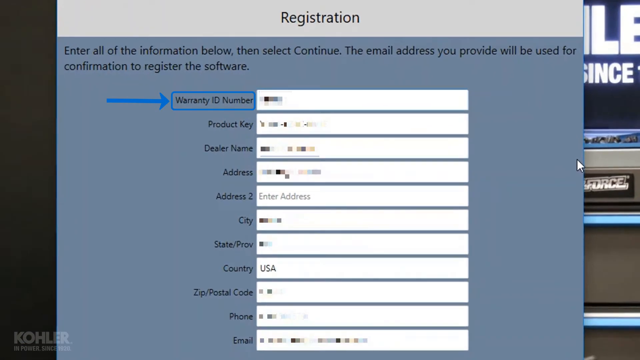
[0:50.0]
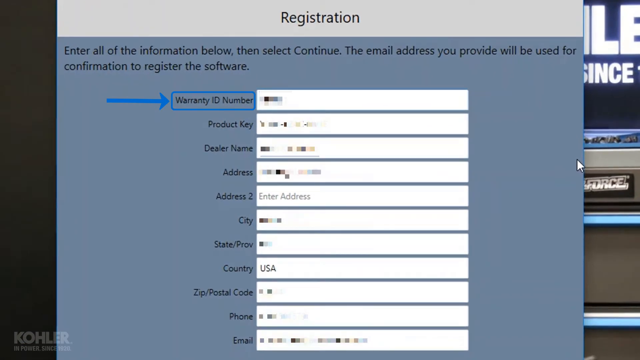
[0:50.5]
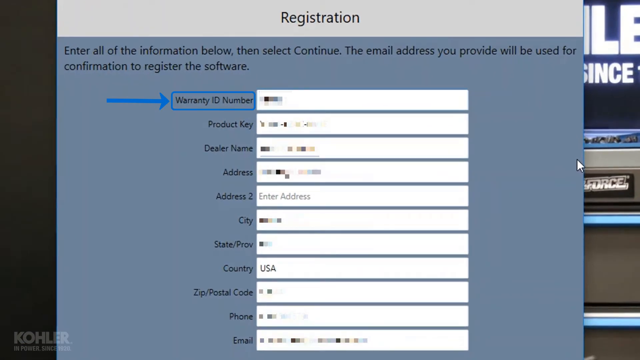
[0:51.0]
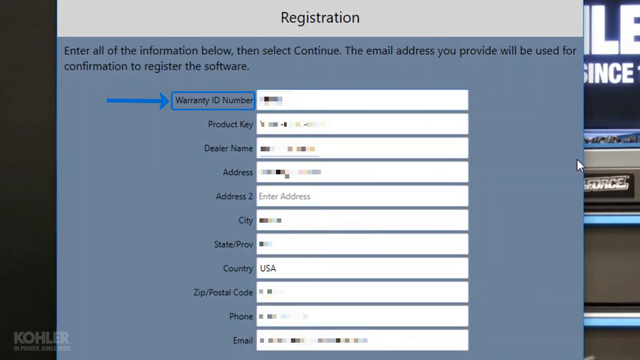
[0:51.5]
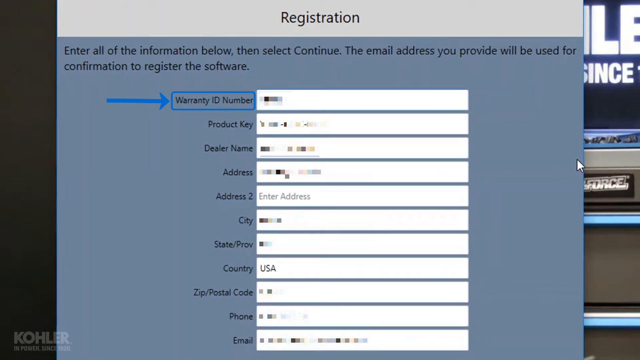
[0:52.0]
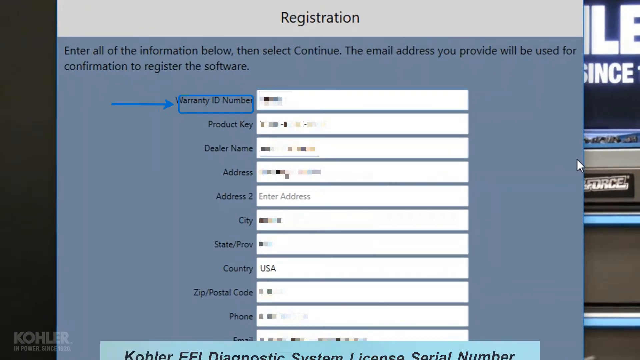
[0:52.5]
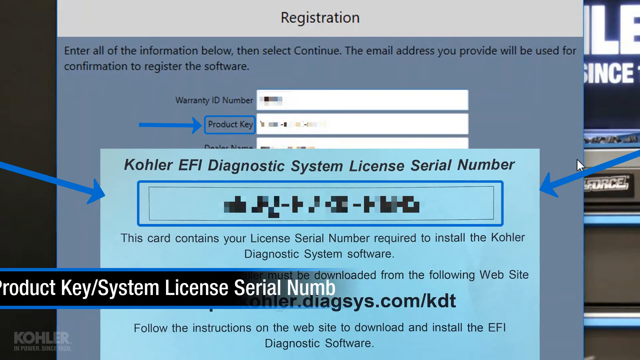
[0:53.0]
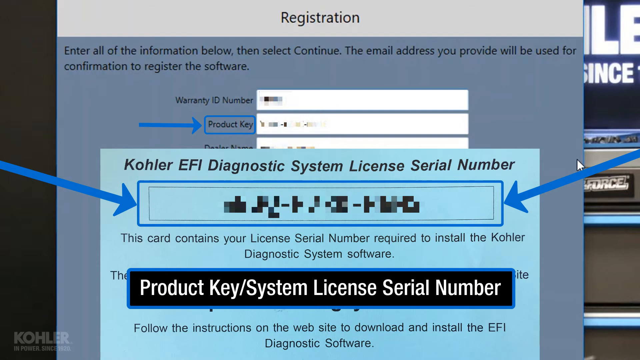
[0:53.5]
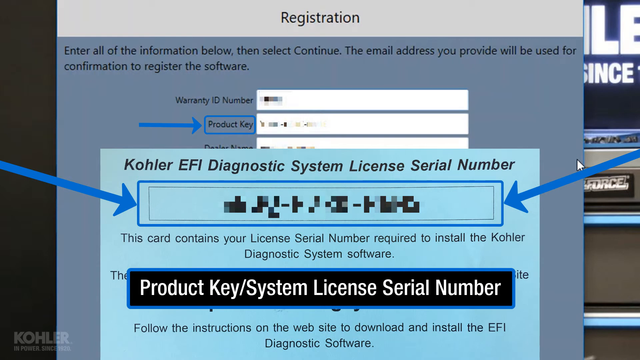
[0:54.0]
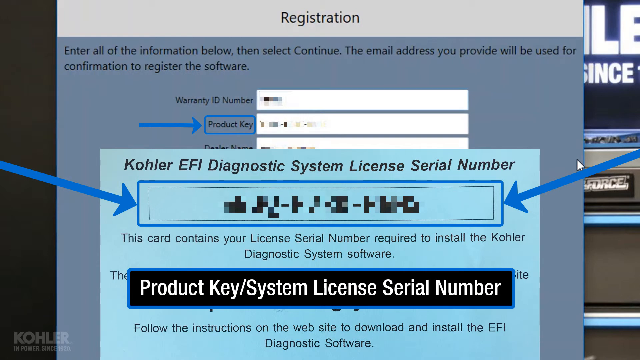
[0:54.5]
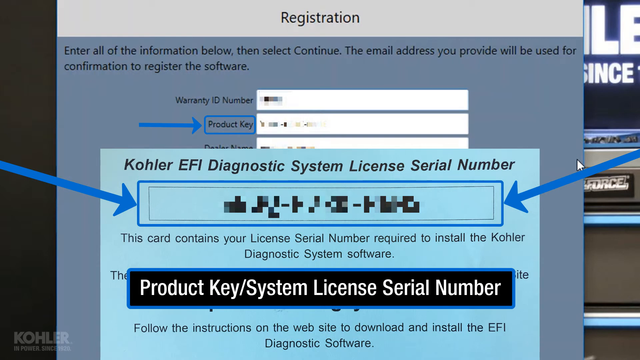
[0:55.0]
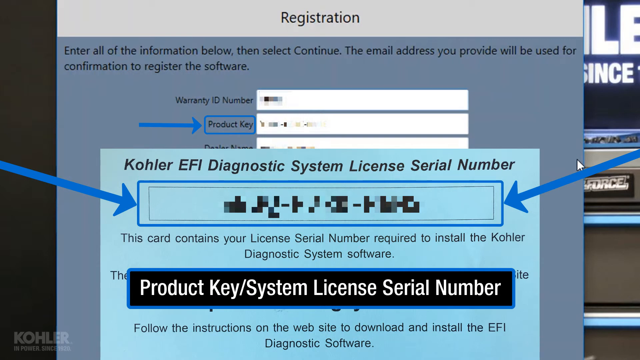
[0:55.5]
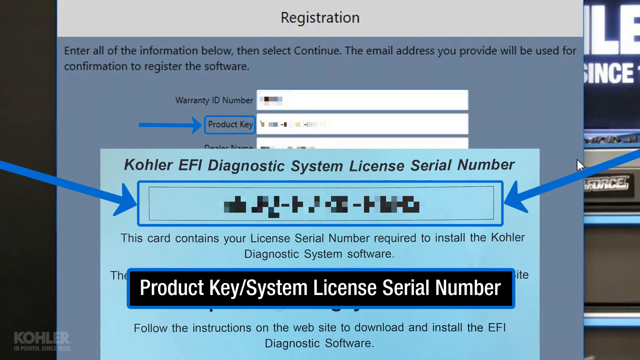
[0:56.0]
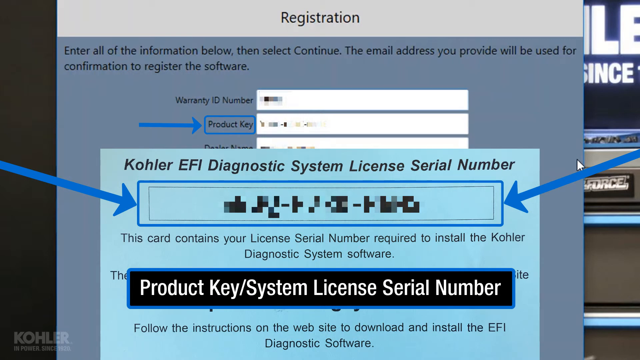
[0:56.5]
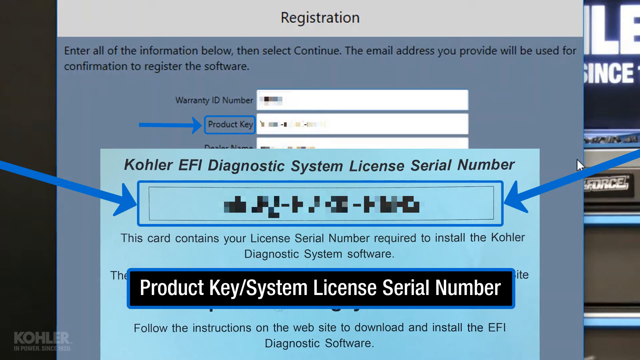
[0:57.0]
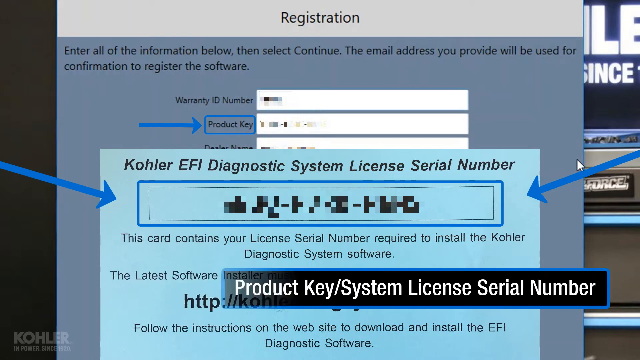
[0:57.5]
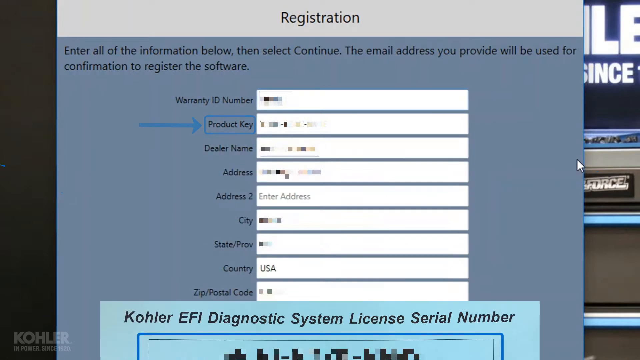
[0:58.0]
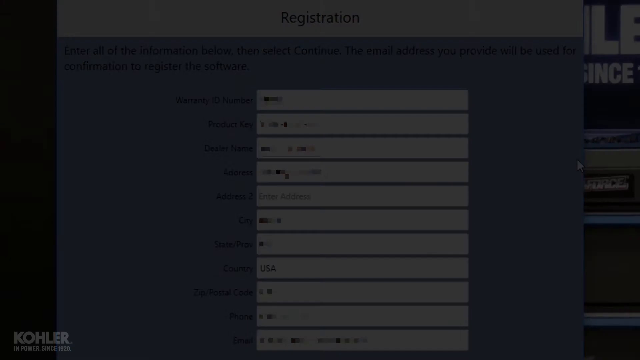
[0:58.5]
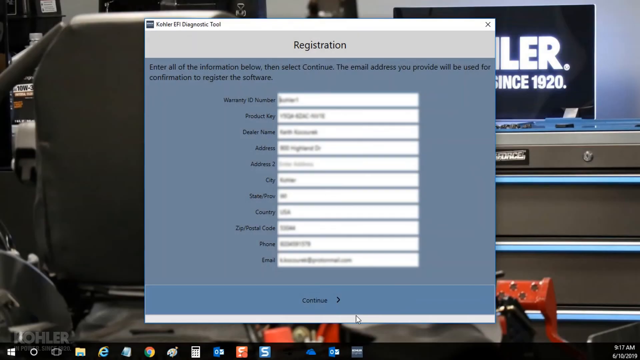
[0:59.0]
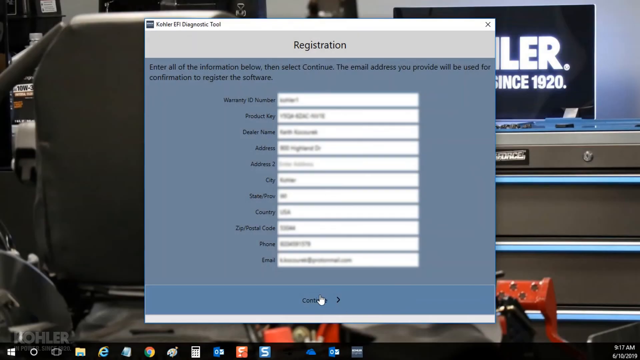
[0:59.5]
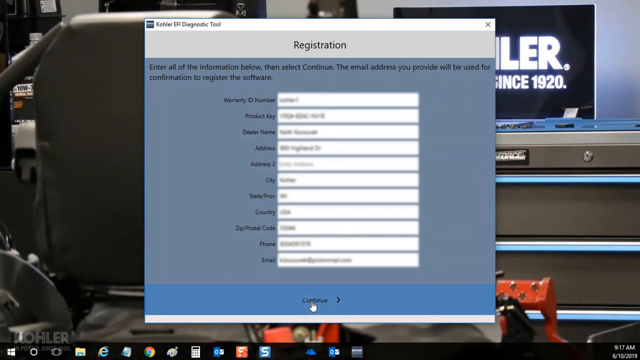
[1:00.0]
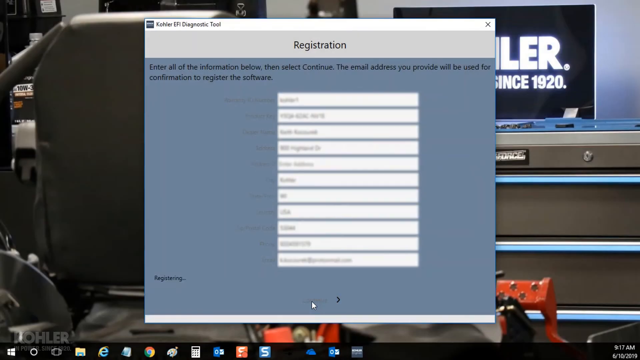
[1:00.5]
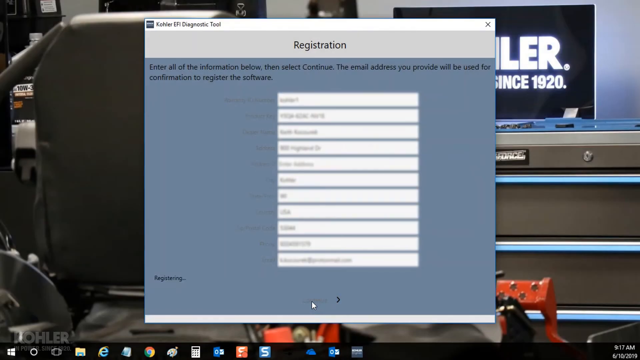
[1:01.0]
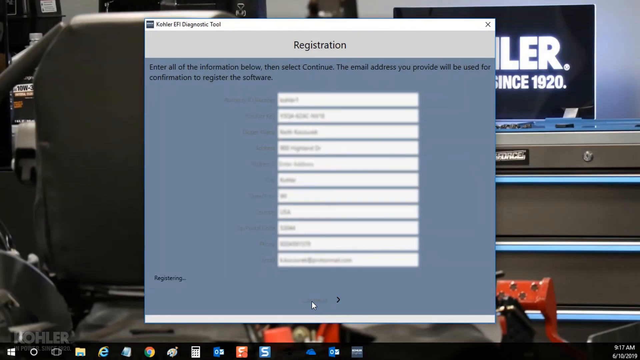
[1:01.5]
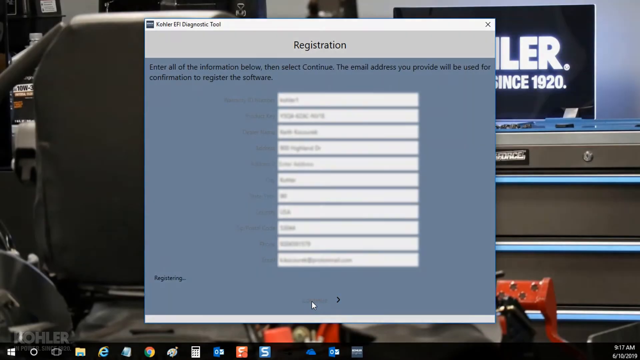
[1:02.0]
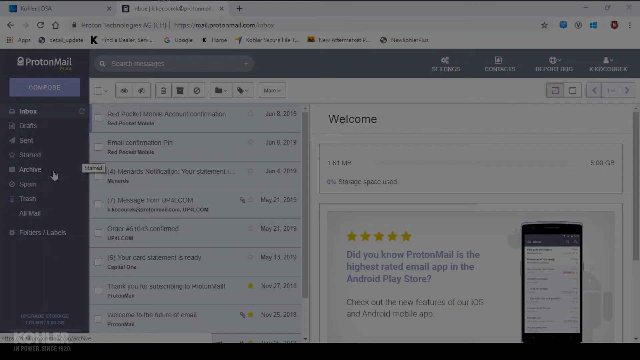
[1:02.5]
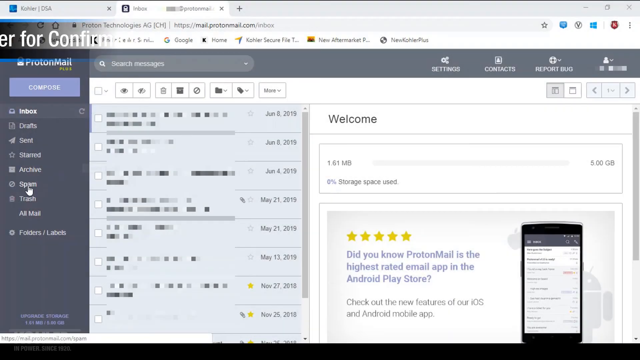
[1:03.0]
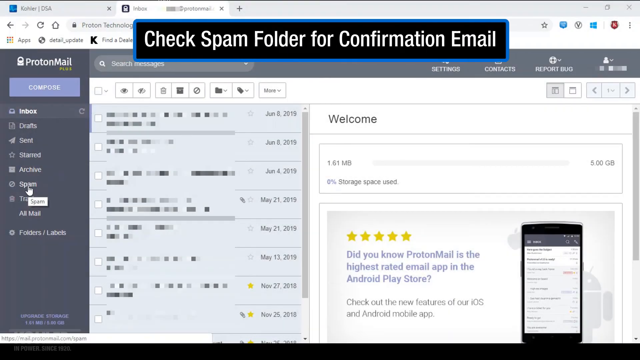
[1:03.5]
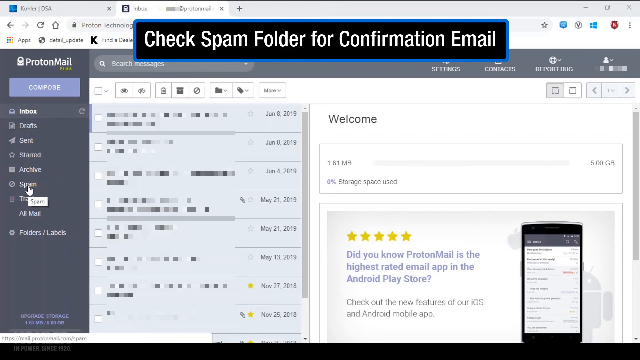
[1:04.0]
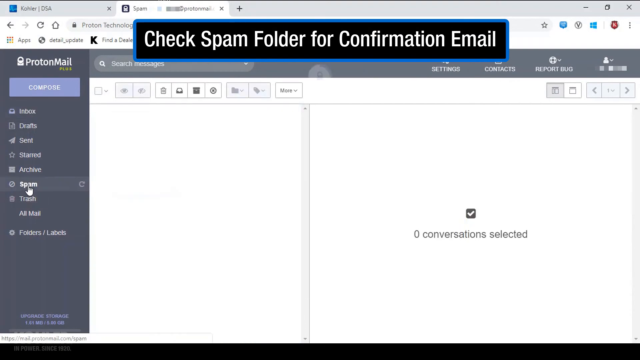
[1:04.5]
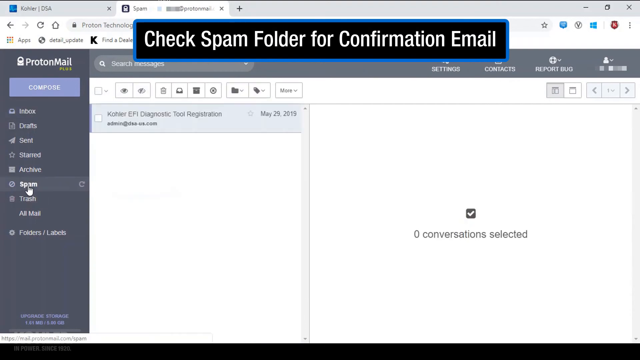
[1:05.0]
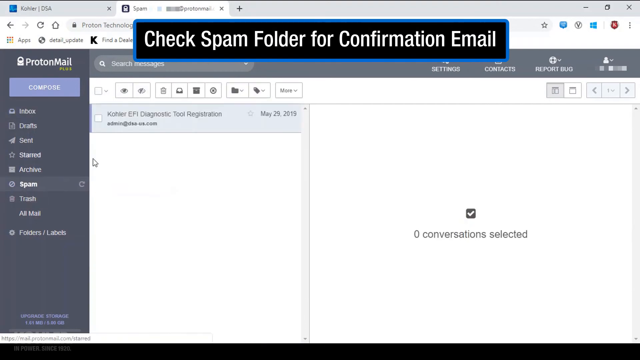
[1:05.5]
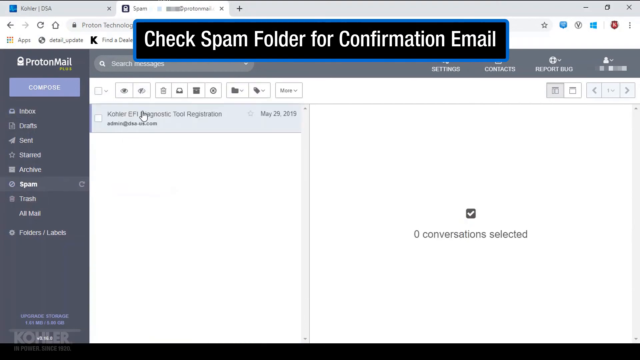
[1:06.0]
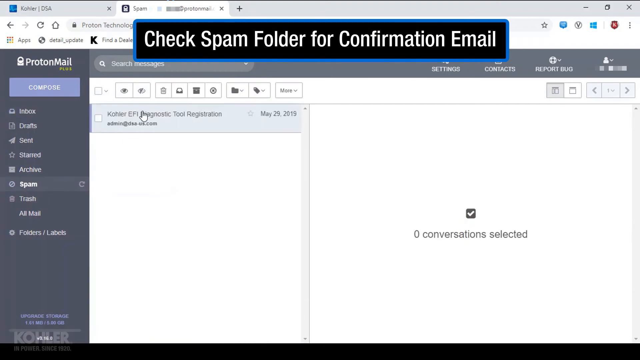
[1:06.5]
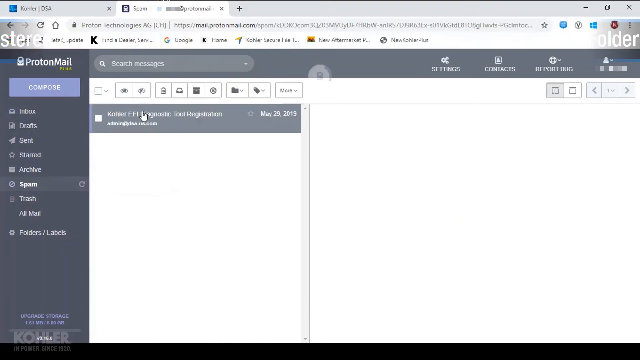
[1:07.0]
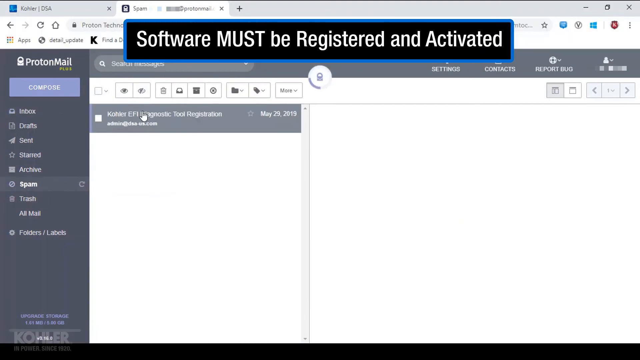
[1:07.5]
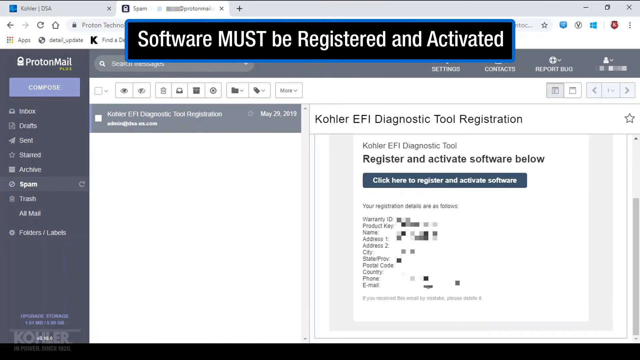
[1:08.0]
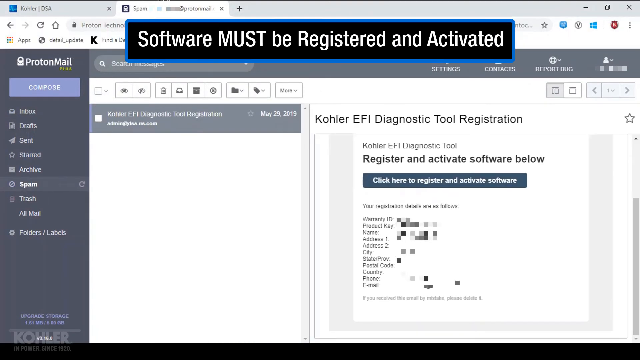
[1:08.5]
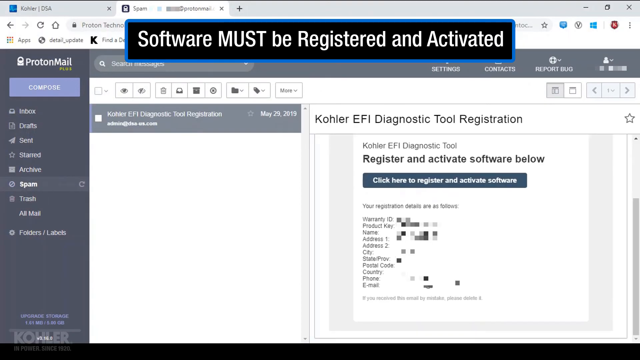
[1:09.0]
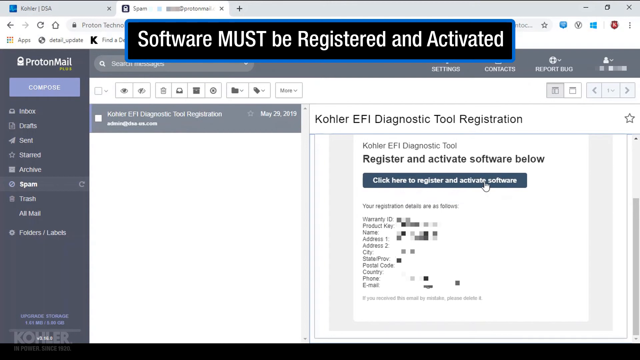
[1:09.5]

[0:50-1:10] Further instructions show how to check whether the software is registered and activated. A product key system license serial number is visible, and the card is shown to contain the license serial number required to install the KOHLER diagnostic system software. The next steps are to check that all details are correct, continue the registration and check for the confirmation email, which the video shows may be sent to spam if it is not in the inbox. The registration email contains a "click here to register and activate software" link, which is clicked to register and activate the software.